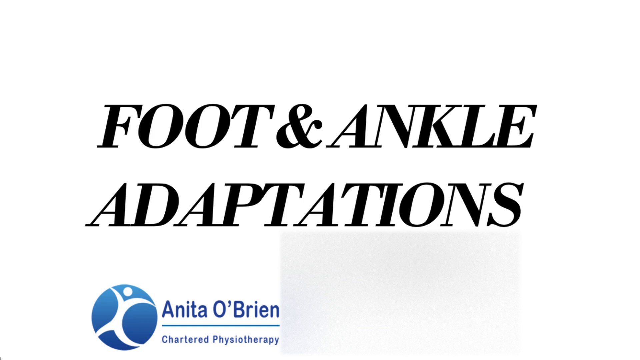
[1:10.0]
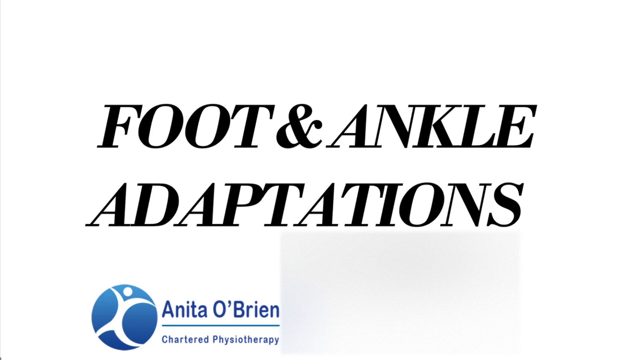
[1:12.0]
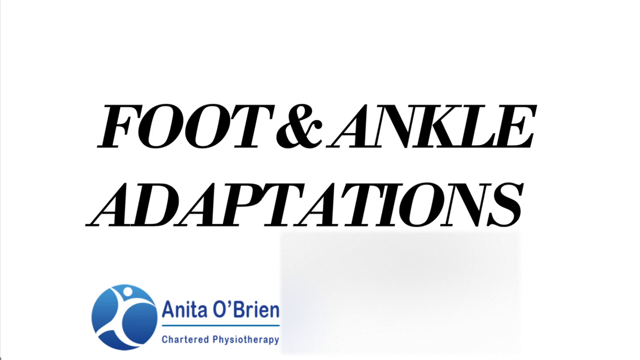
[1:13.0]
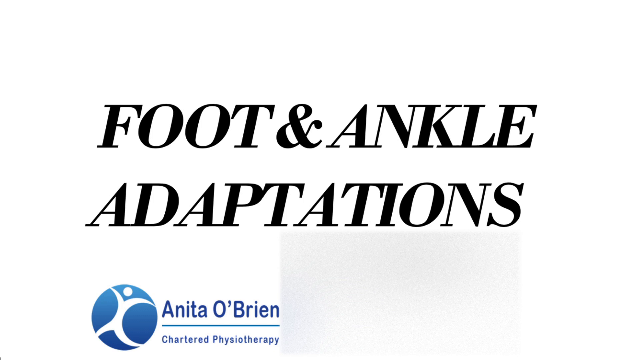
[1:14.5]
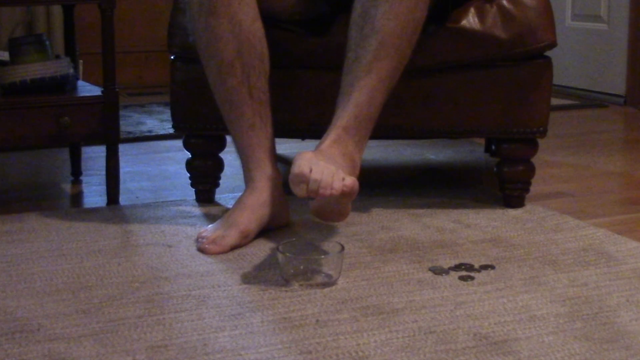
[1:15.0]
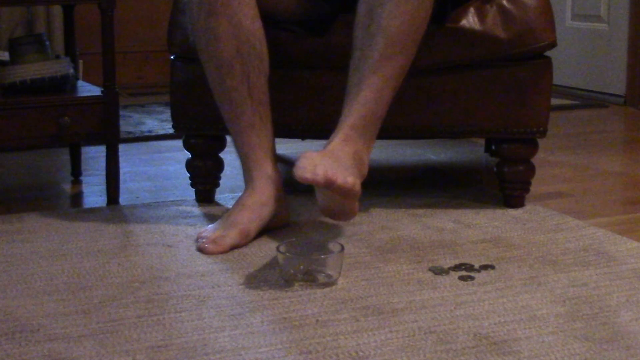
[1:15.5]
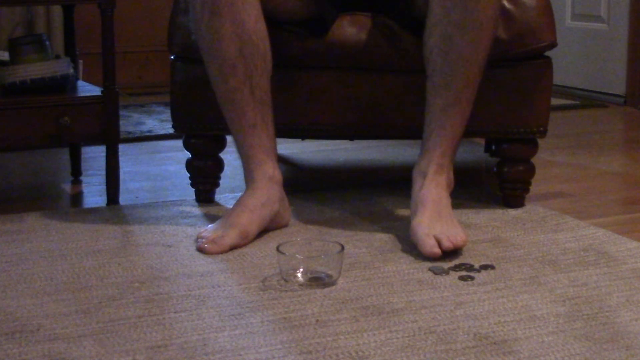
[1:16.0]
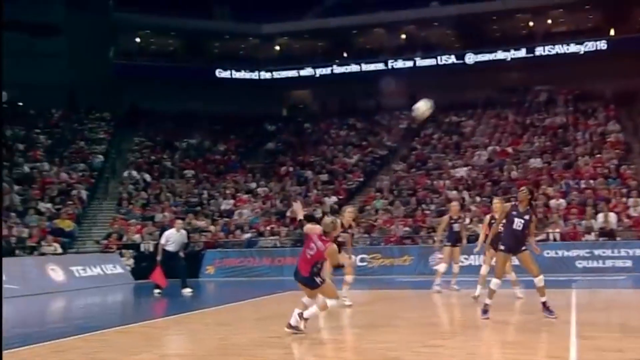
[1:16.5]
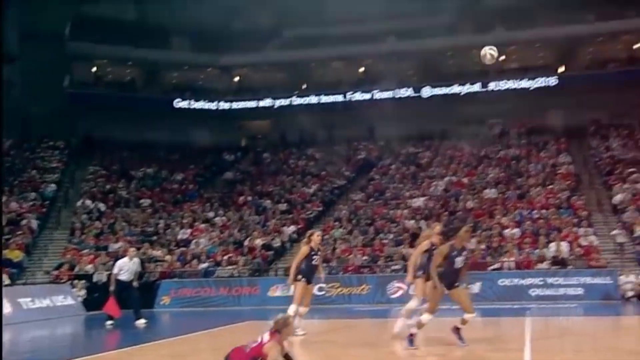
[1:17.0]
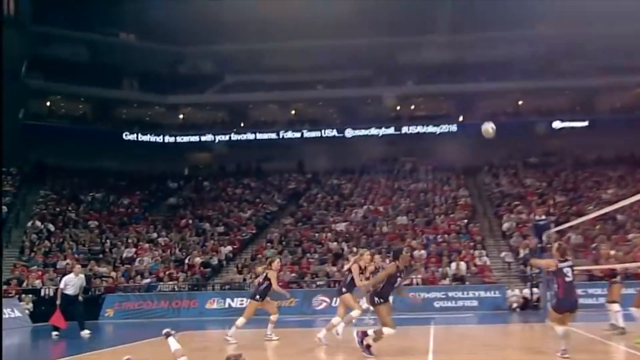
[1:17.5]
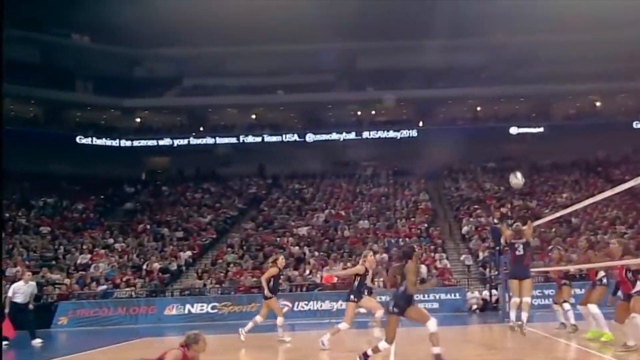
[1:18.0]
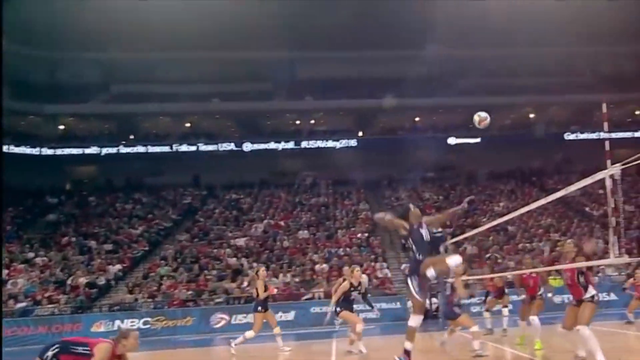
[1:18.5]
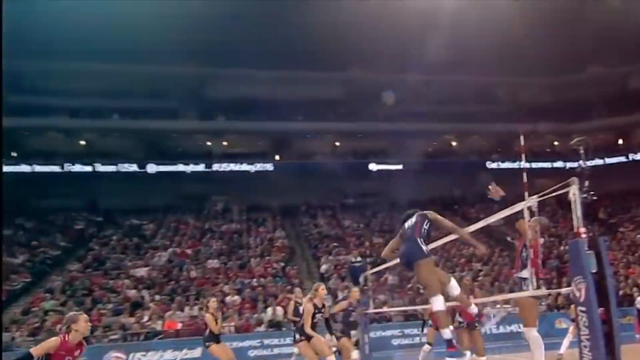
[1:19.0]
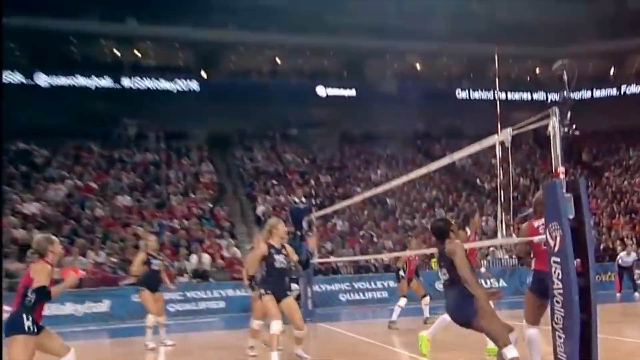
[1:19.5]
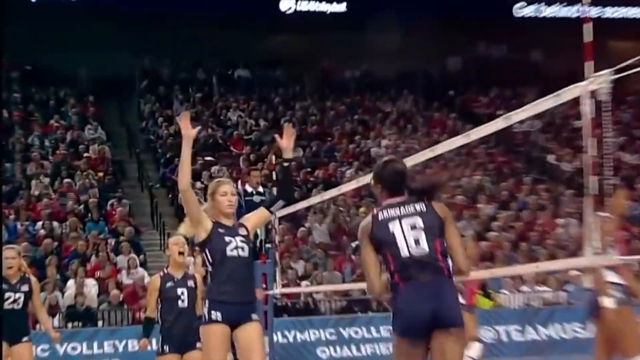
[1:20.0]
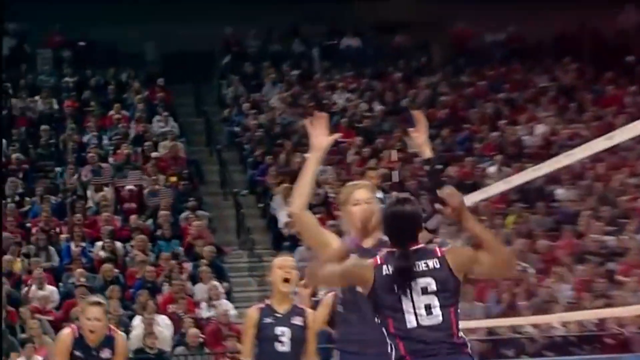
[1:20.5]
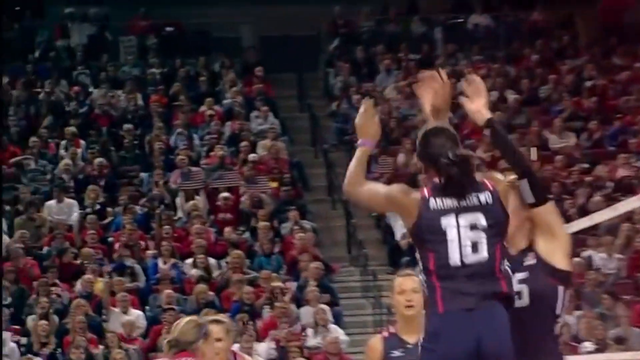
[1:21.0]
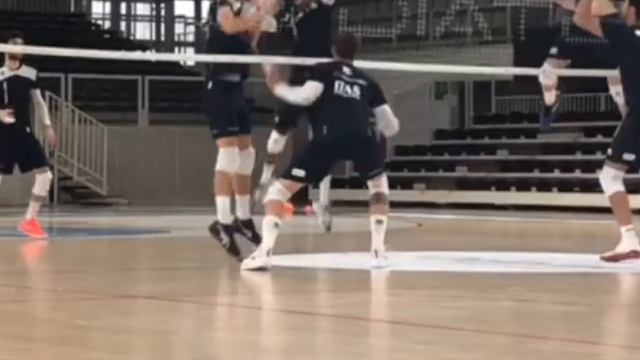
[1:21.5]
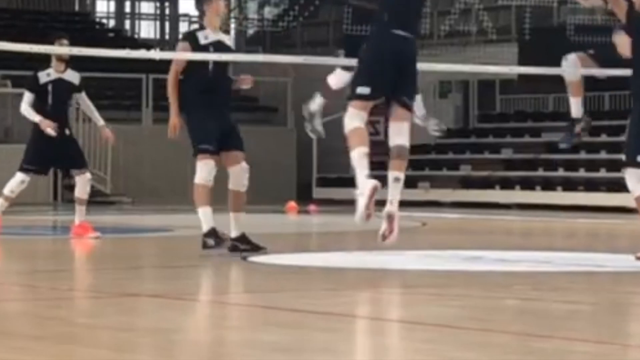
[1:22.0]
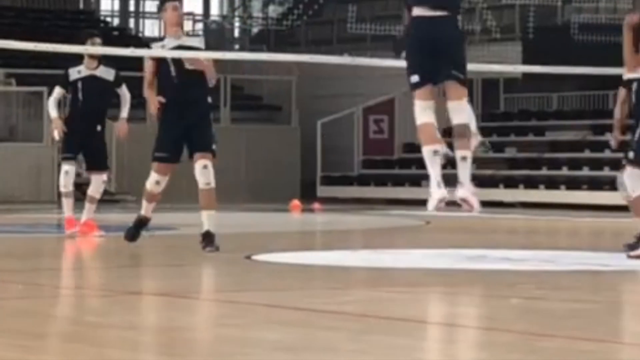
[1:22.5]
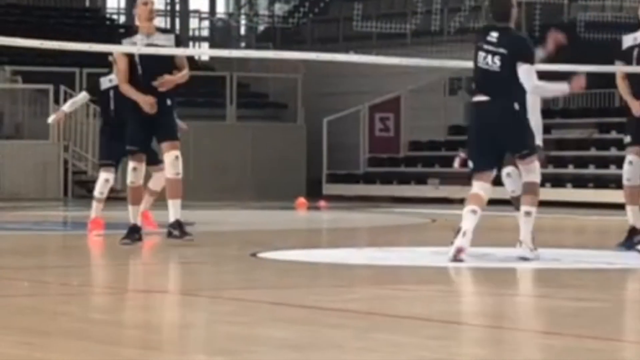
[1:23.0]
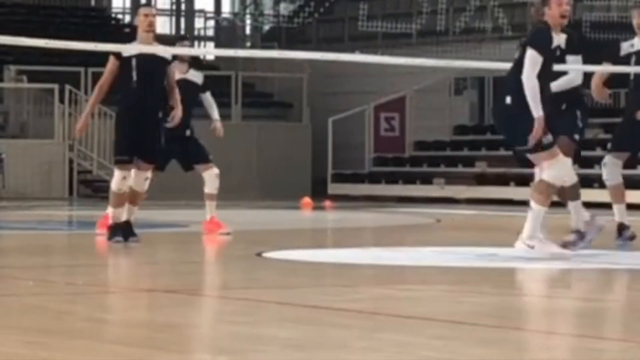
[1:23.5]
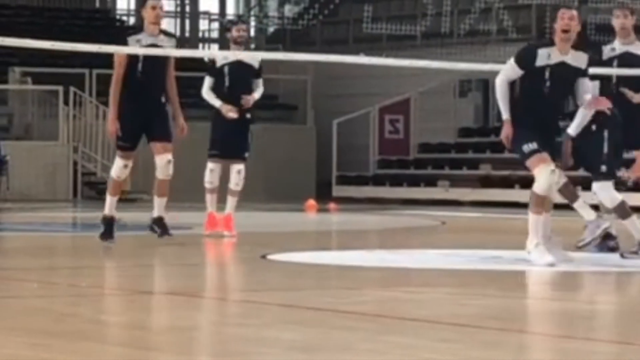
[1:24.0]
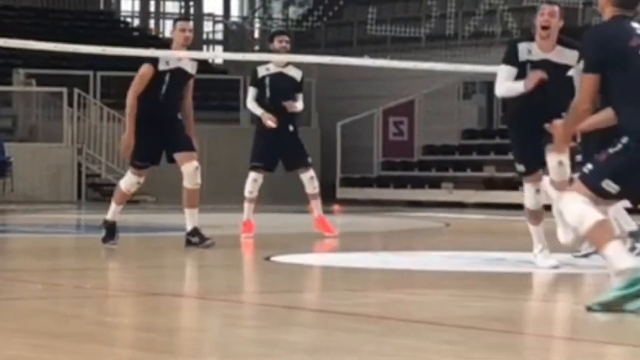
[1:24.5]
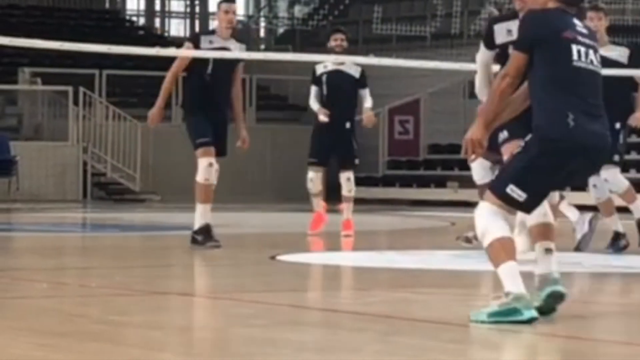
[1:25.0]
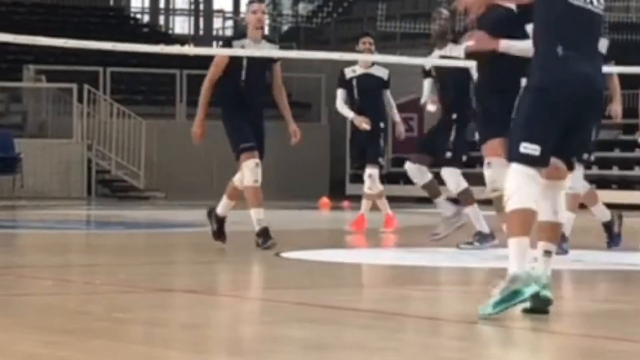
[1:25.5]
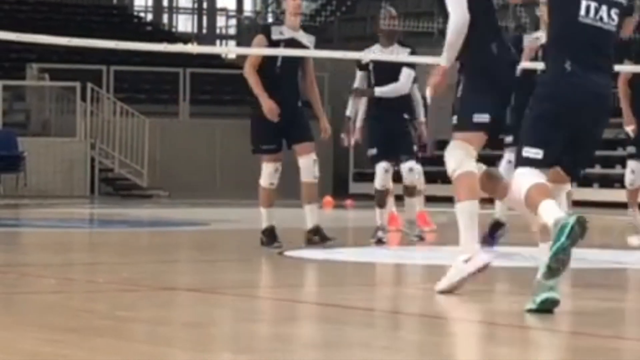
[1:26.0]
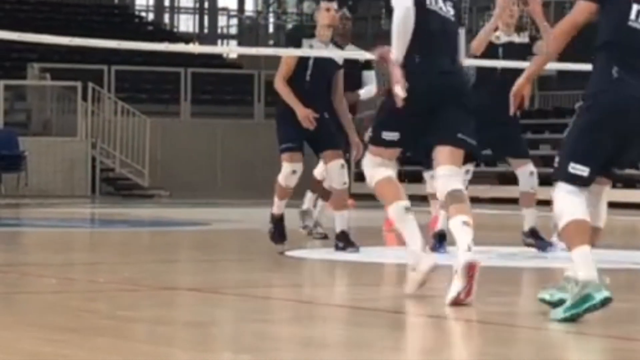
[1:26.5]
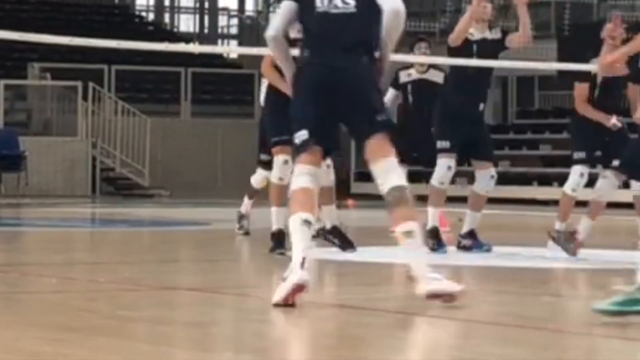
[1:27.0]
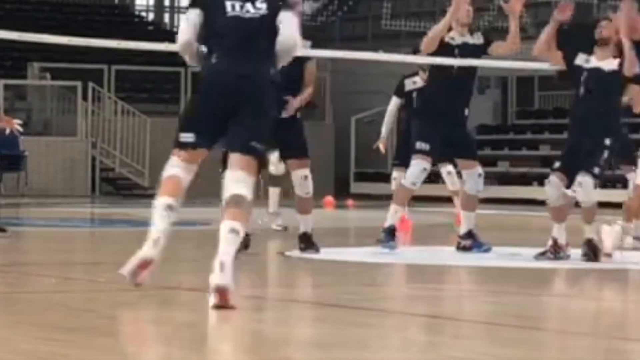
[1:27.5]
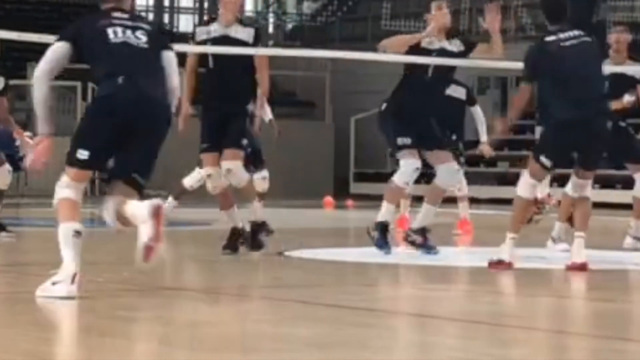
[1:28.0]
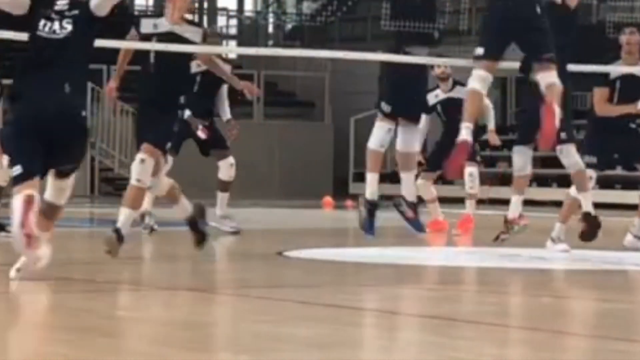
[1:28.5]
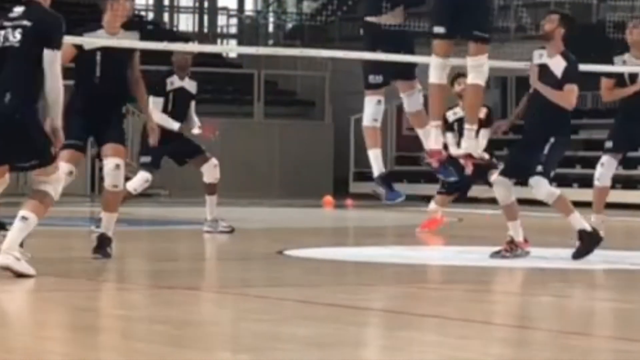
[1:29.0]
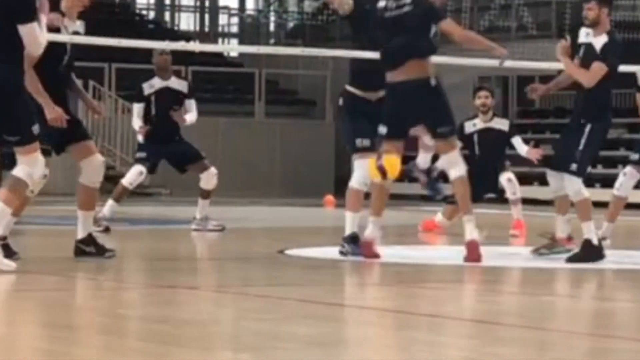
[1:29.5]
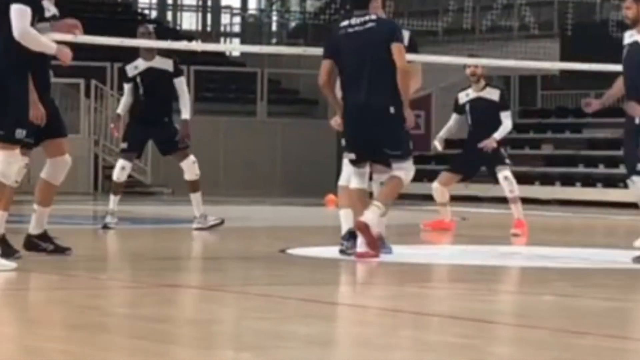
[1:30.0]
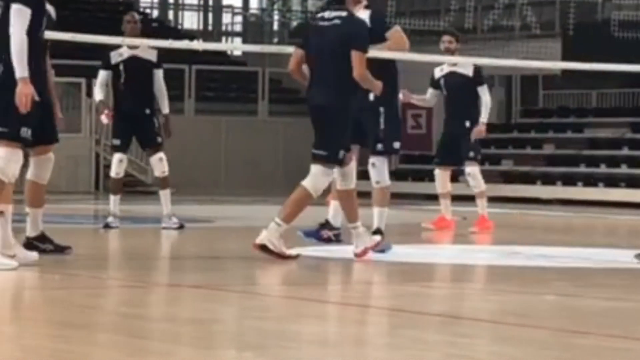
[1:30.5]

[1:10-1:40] The screen is white with black text across the middle reading "foot and ankle adaptions". Underneath is a blue circle containing a solid white design of a person, and to its right it says "Anita O'Brien, Chartered Physiotherapy". The video cuts to a volleyball game on a basketball court with a net stretched across the middle and stands all around filled with people. Girls' teams are on both sides: the team on the left wears dark navy blue uniforms and the girls on the right wear red uniforms. Another shot shows a different volleyball game with guys on both sides of the net and empty stands in the background. Every one of the guys wears a black shirt with white knee pads and white elbow pads.